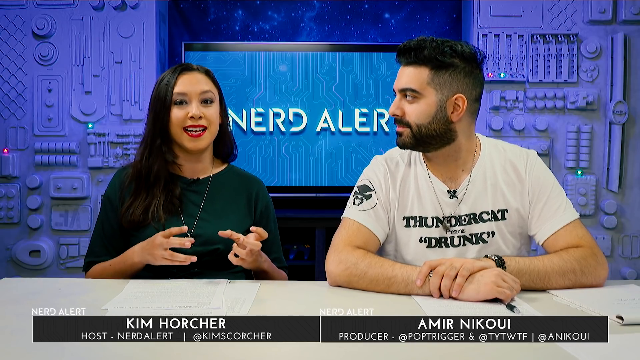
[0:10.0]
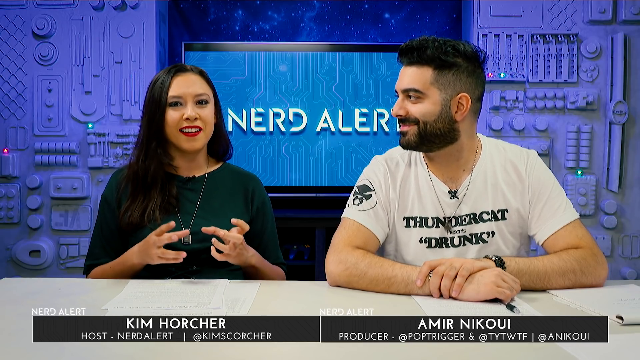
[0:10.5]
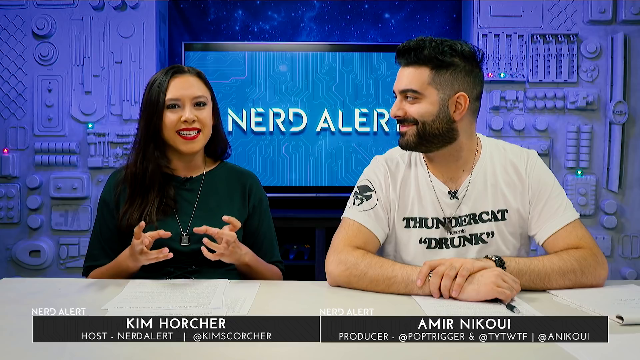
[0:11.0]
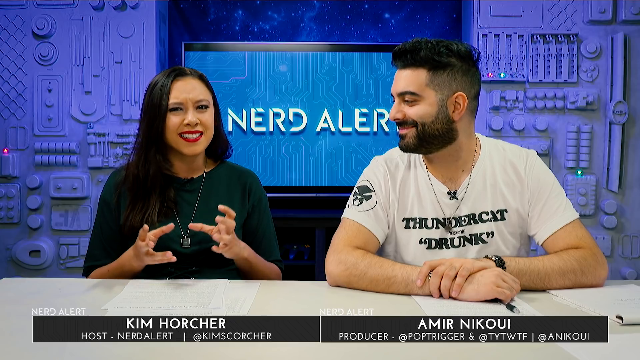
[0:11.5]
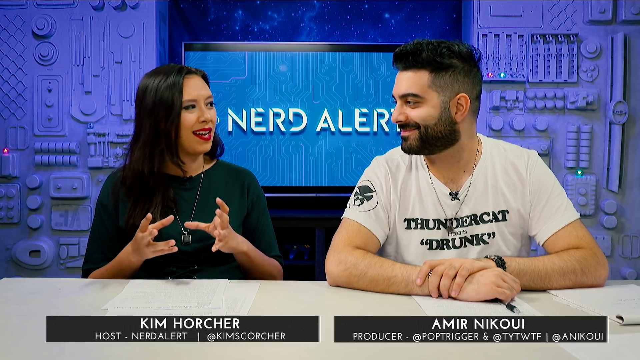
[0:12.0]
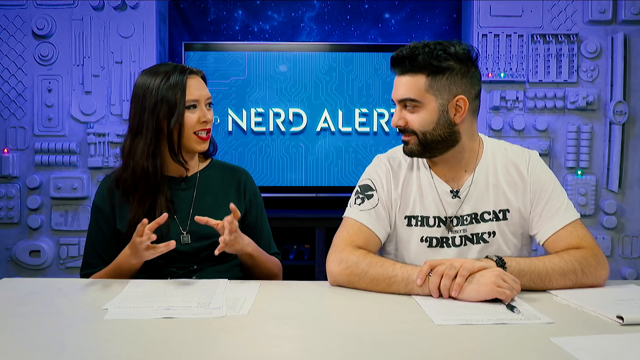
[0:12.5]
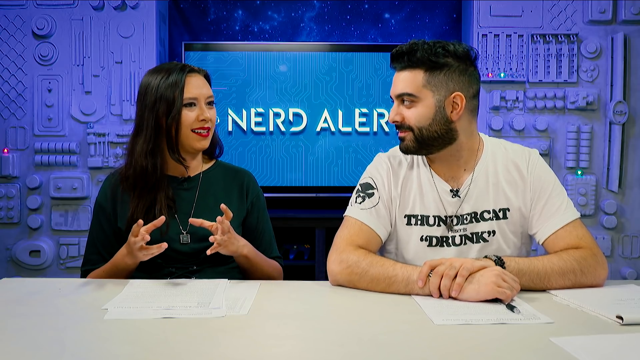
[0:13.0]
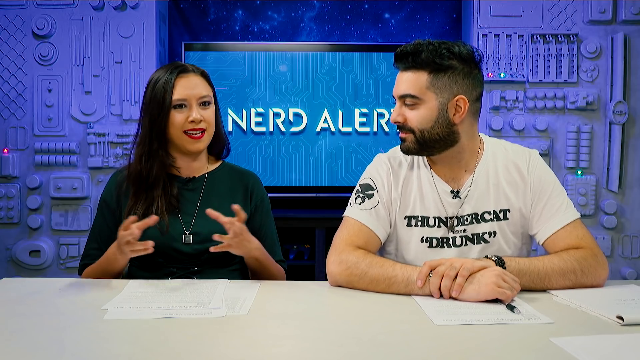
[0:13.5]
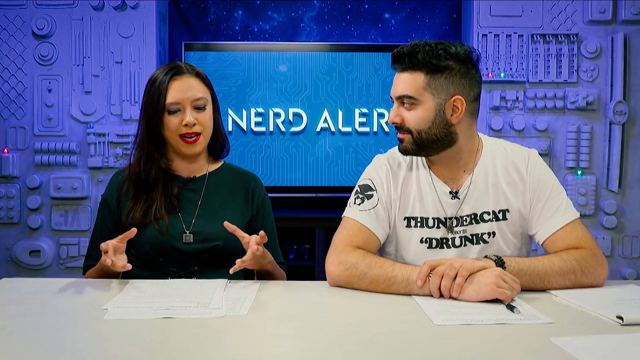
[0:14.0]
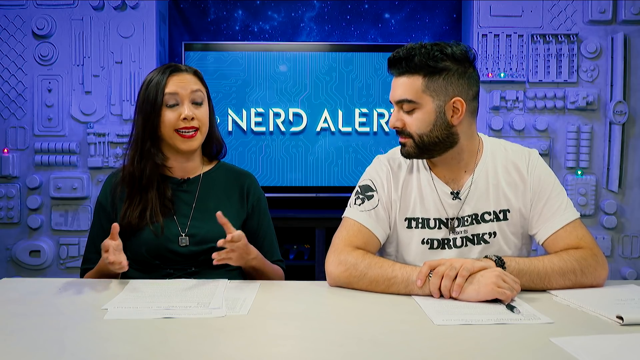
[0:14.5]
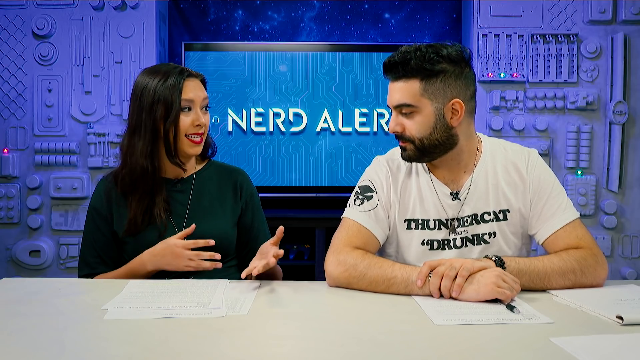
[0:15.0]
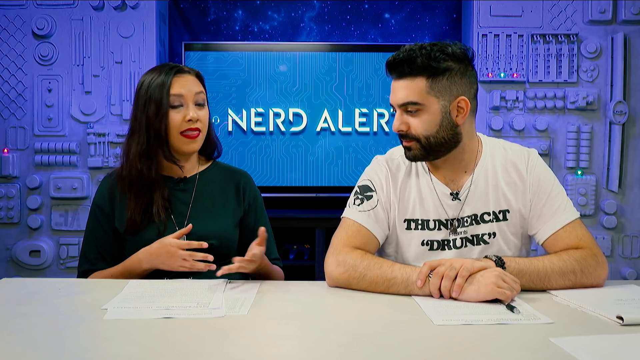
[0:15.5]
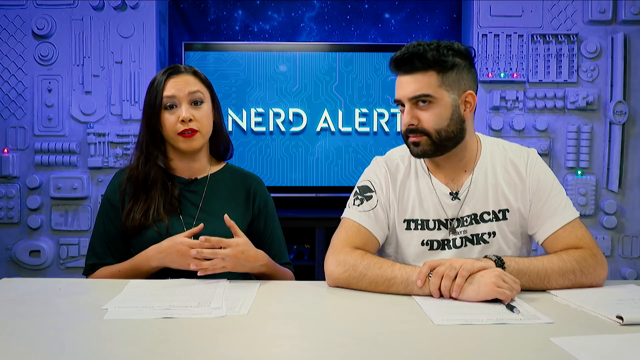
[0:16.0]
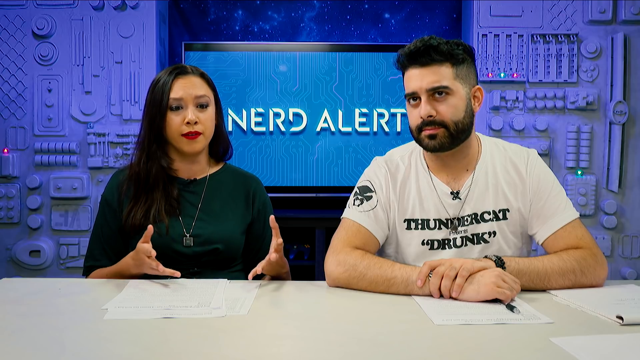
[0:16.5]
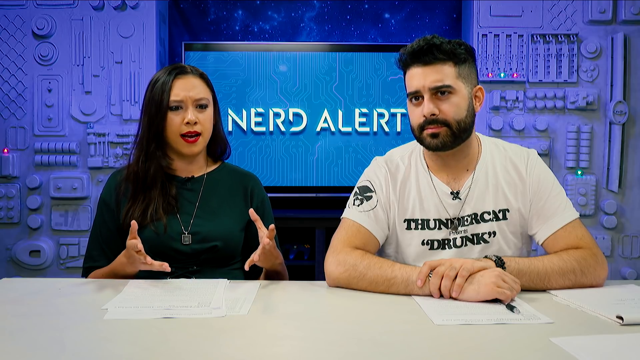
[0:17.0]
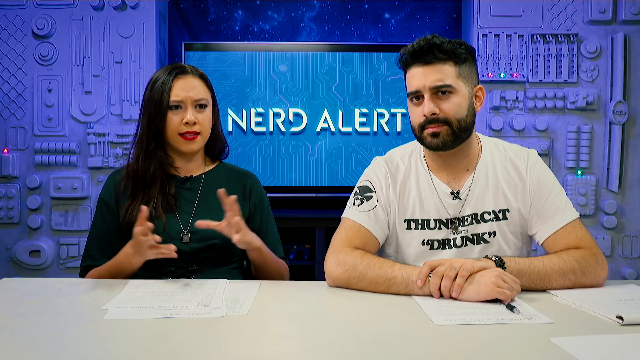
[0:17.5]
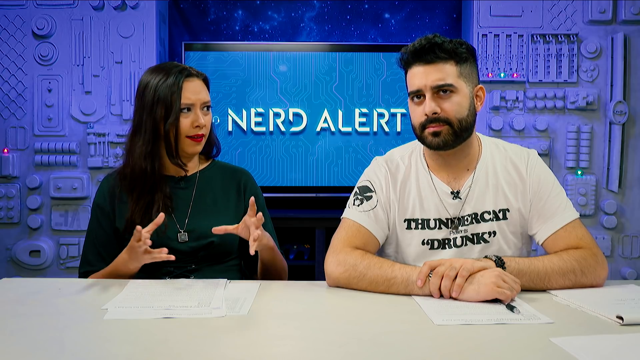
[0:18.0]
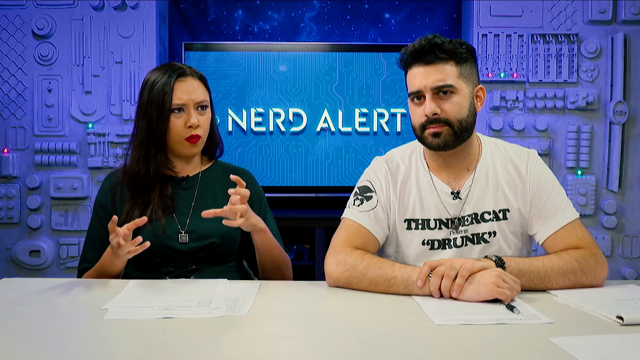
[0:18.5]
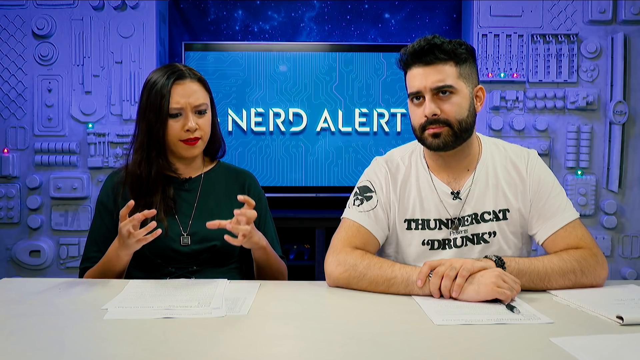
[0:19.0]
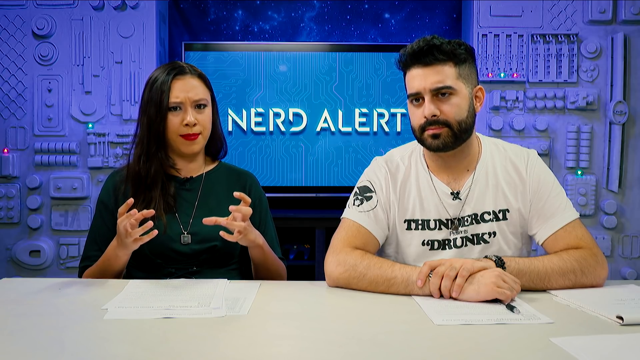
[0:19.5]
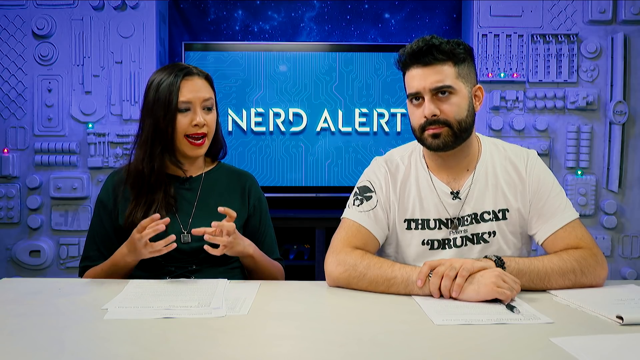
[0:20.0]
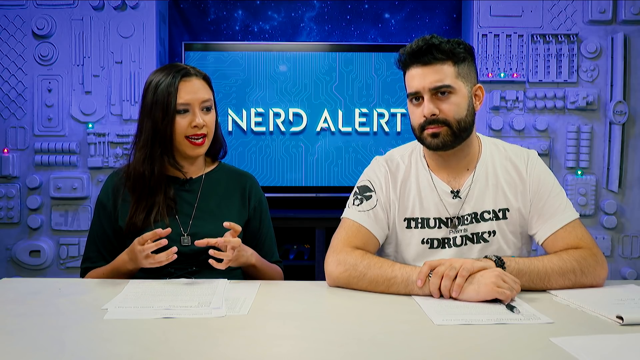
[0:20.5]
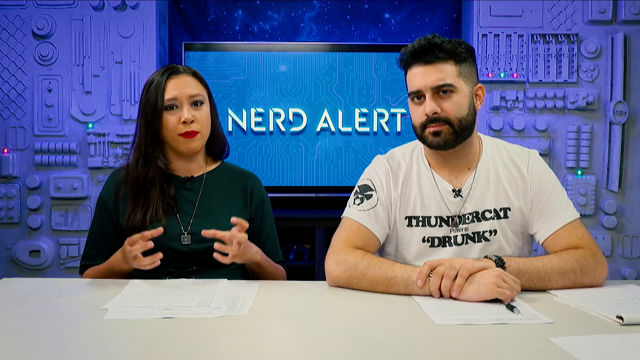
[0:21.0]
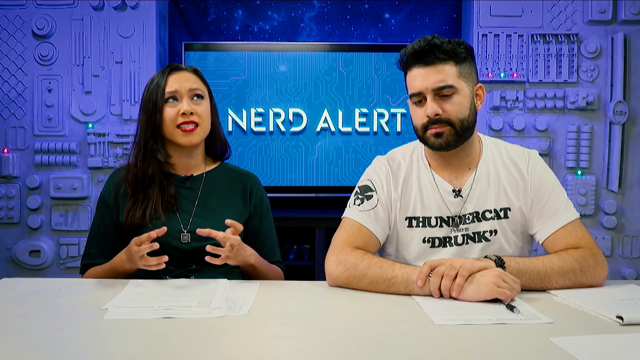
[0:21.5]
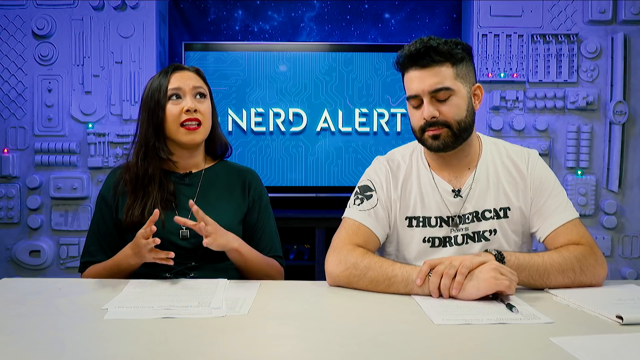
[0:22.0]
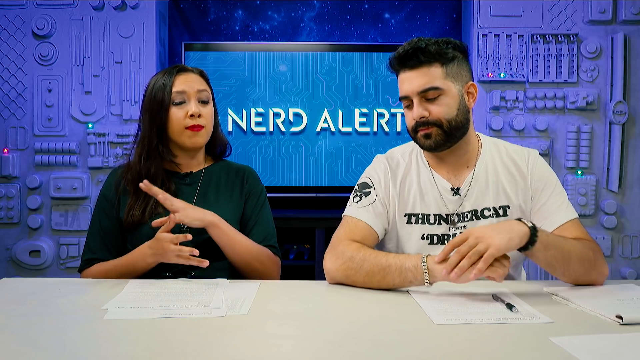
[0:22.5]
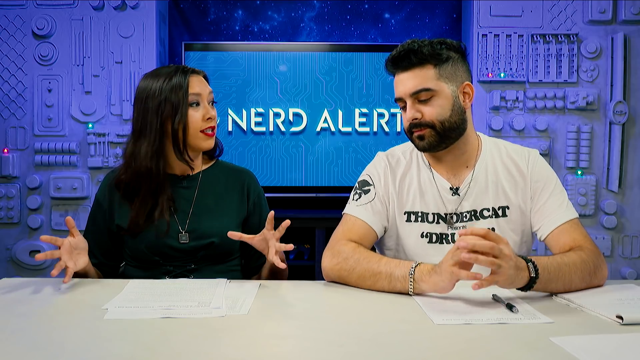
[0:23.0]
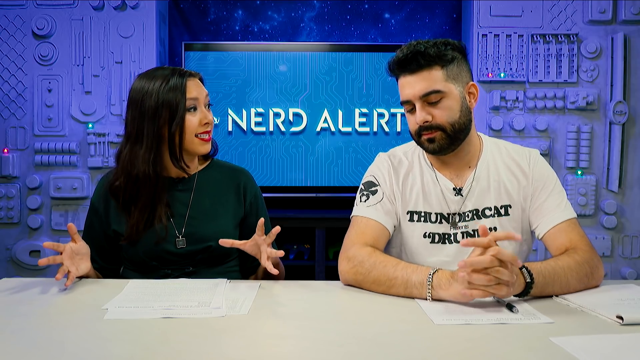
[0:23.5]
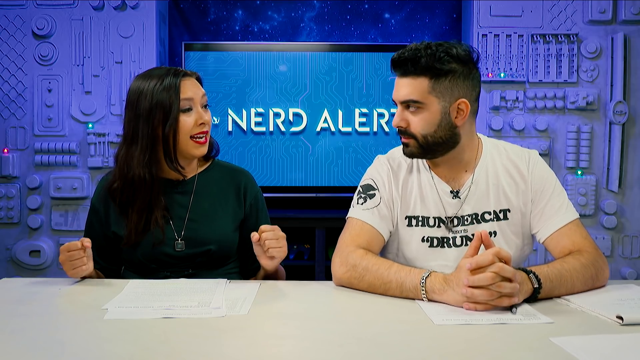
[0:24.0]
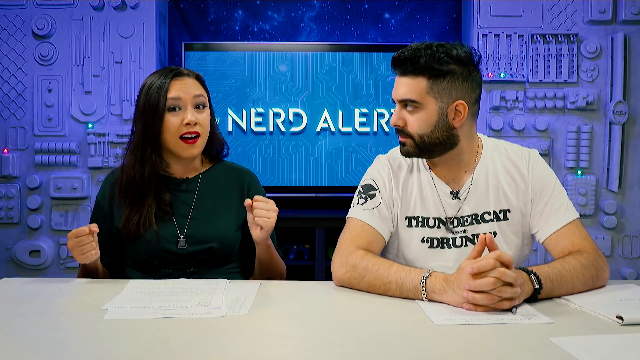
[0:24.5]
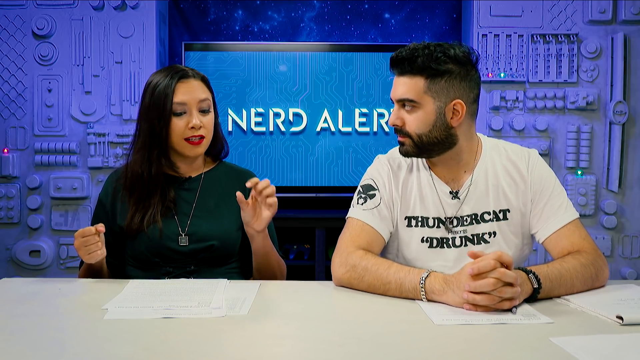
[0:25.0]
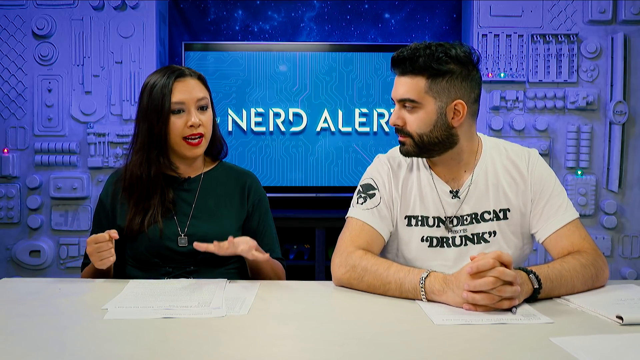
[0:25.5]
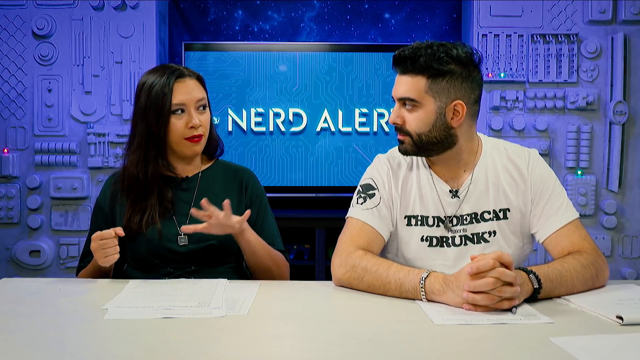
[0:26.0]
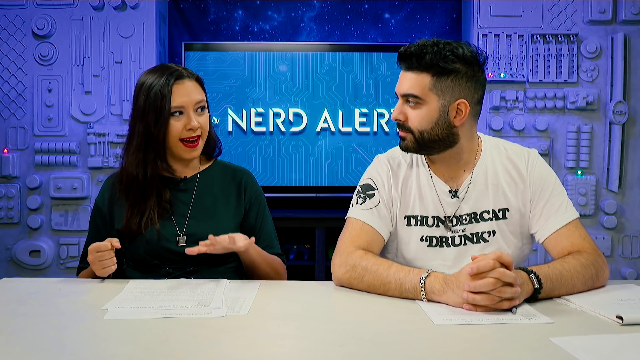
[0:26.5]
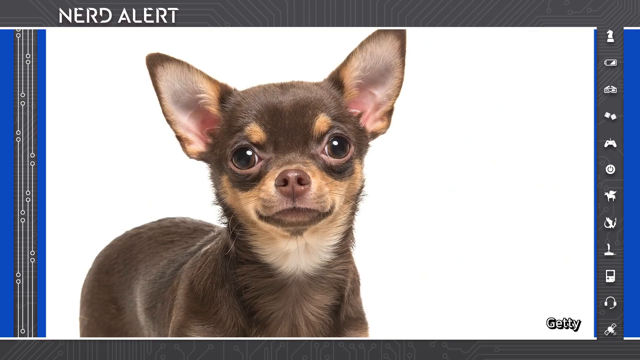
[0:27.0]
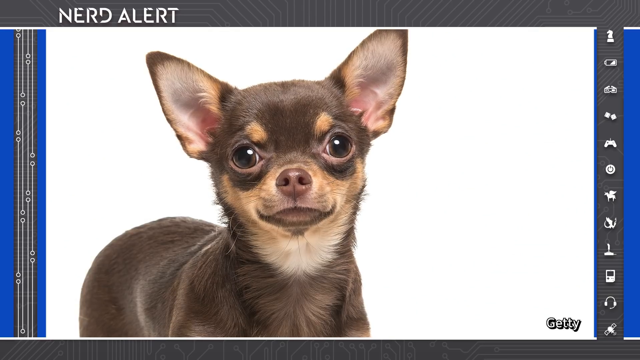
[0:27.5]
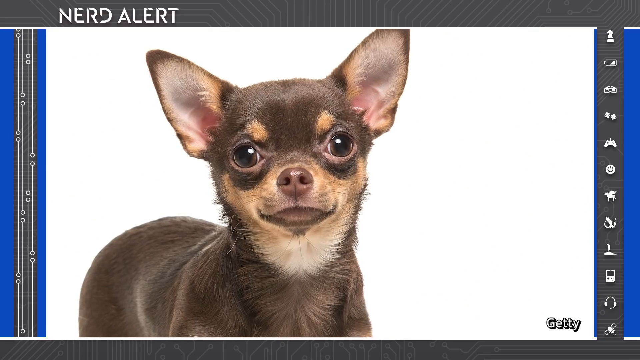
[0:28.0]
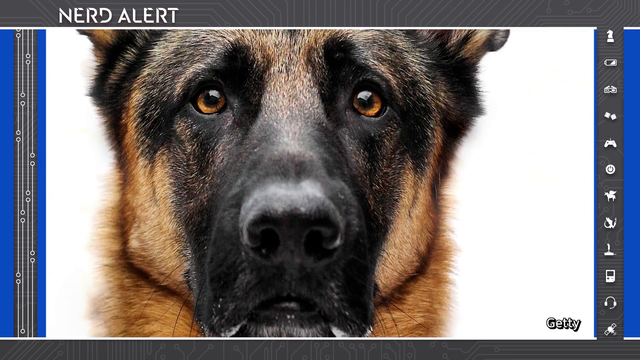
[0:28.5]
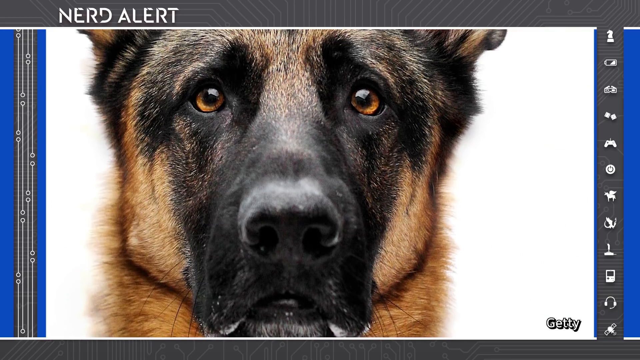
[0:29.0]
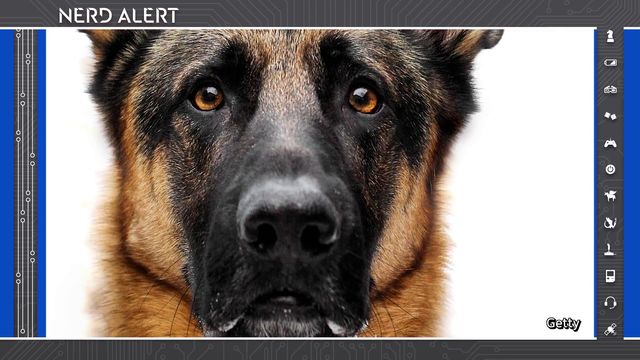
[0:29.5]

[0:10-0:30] A man and a woman talk while looking at the screen, apparently in a newsroom. The woman wears a green top, a necklace and red lipstick, and has long black hair. The man wears a white T-shirt with writing on the center front, a necklace, a black wristwatch and, on his other hand, a silver bracelet. He has a mohawk hairstyle and a black beard. The woman explains, making facial expressions while looking at the man and at the screen, lifting her hands up and down and opening her palm. The man looks at her and shows that he agrees with what she is saying. In the foreground there is a blue screen reading "red alert" that looks like a TV screen. The background is white, with green flashing lights on both the left and right sides.